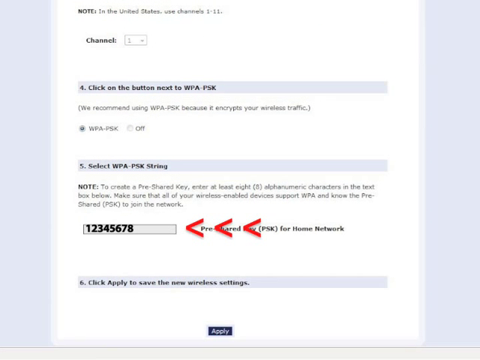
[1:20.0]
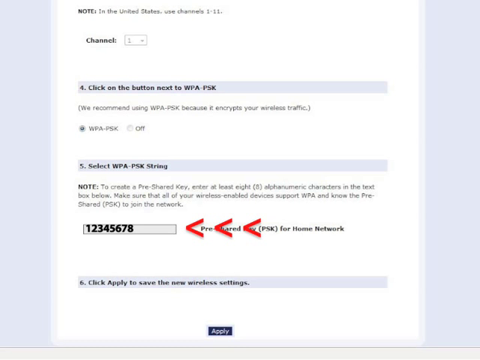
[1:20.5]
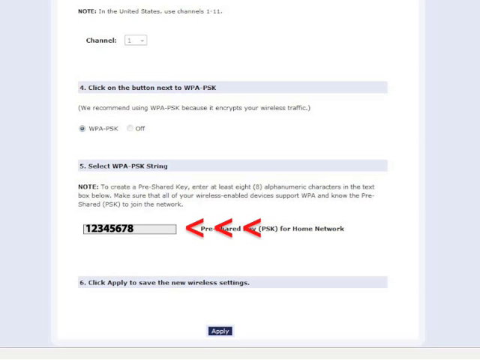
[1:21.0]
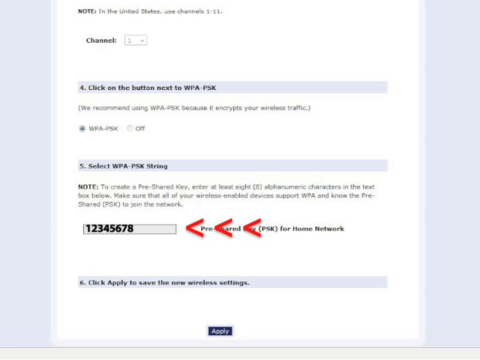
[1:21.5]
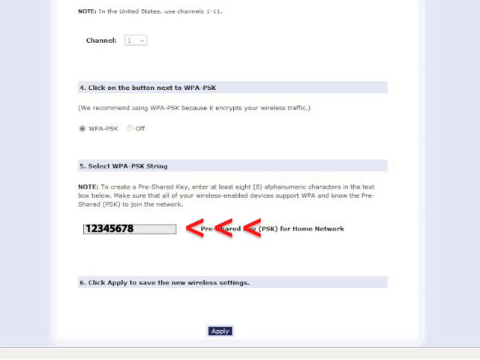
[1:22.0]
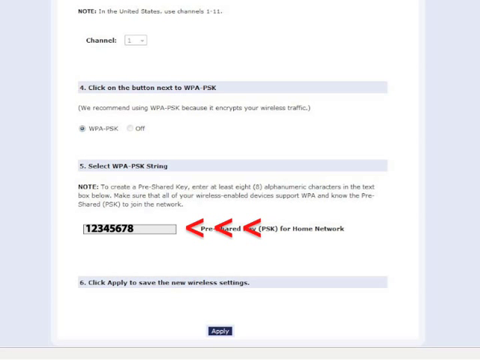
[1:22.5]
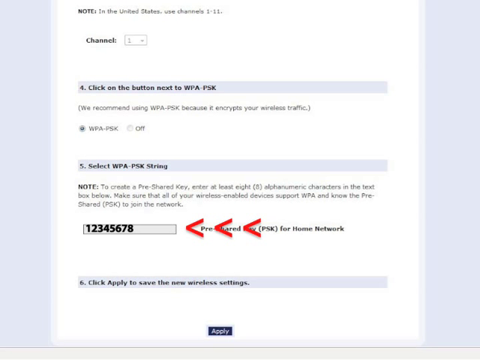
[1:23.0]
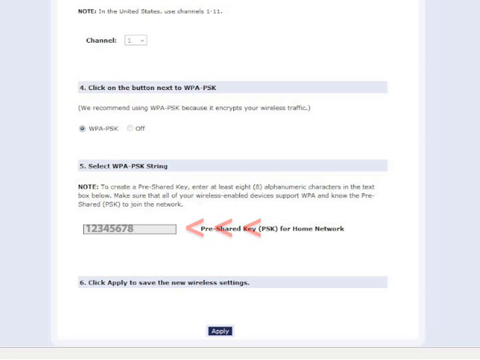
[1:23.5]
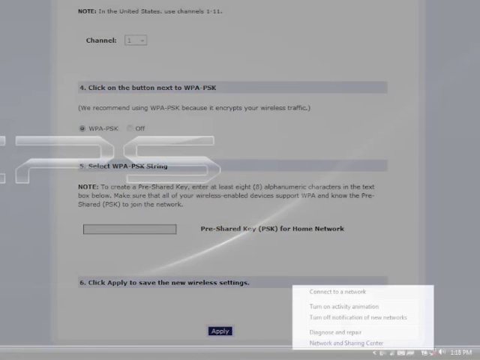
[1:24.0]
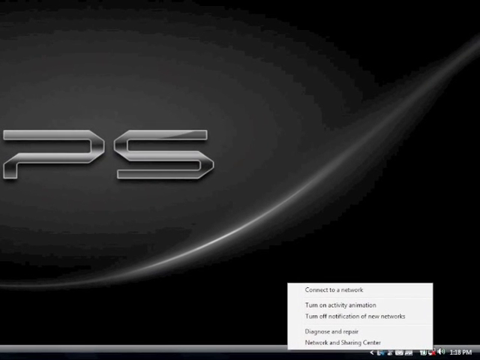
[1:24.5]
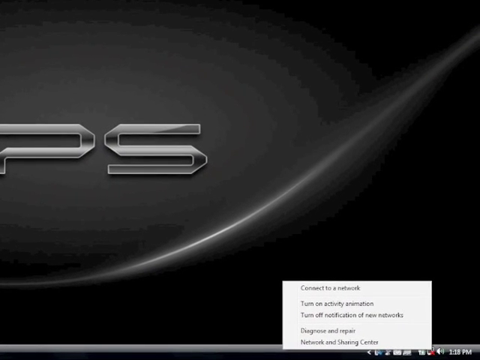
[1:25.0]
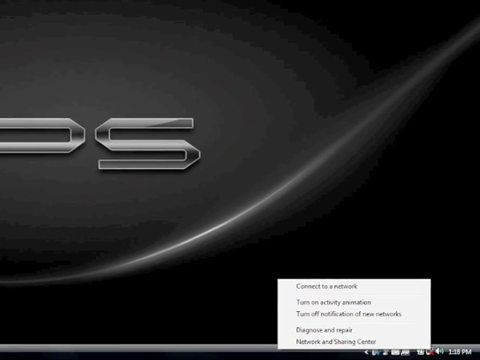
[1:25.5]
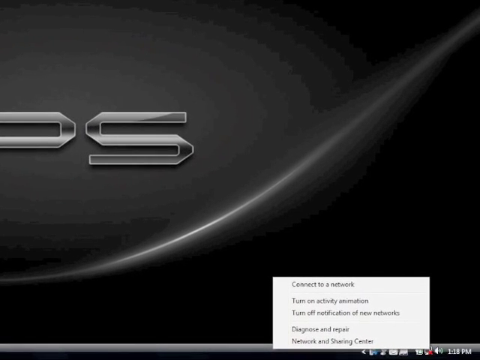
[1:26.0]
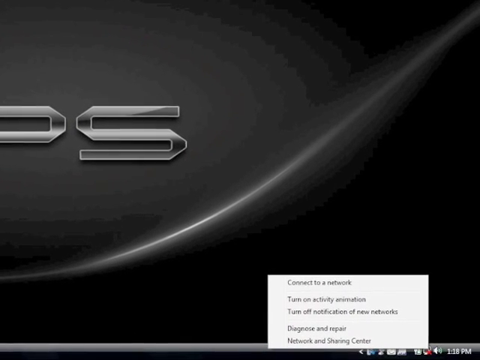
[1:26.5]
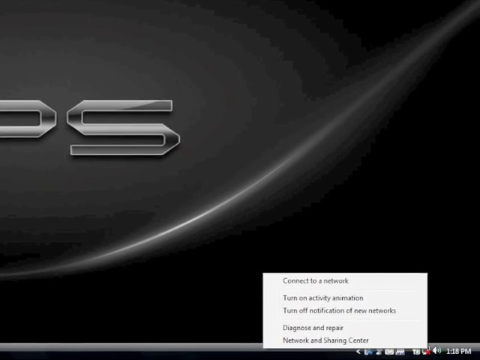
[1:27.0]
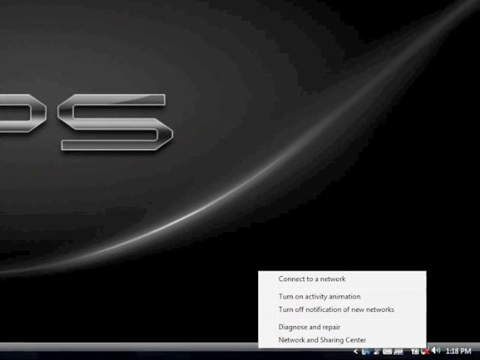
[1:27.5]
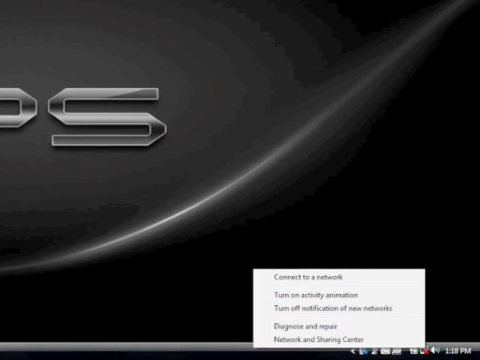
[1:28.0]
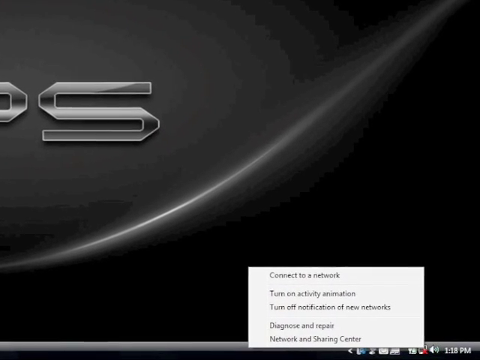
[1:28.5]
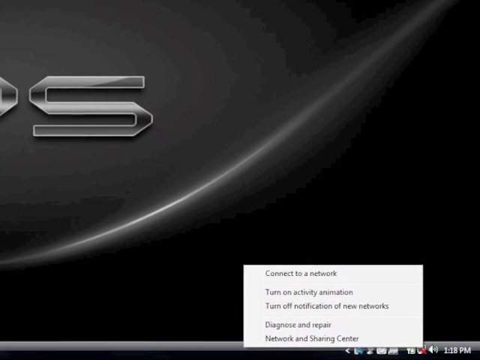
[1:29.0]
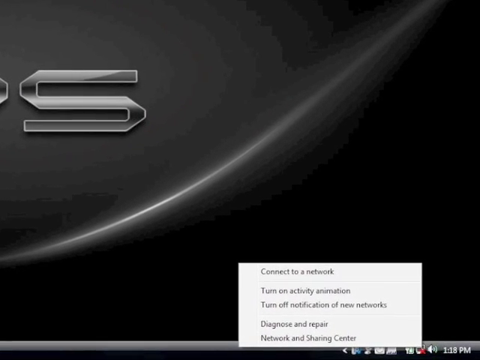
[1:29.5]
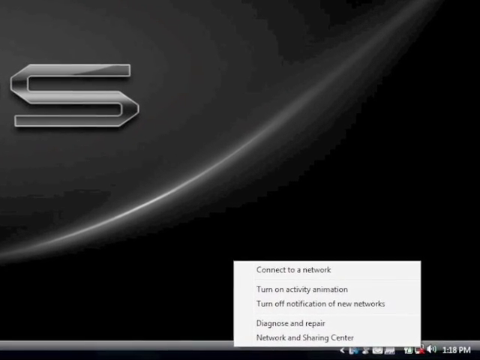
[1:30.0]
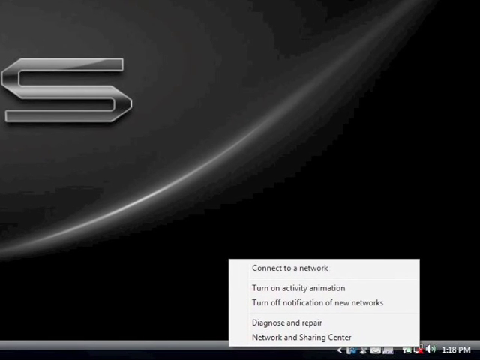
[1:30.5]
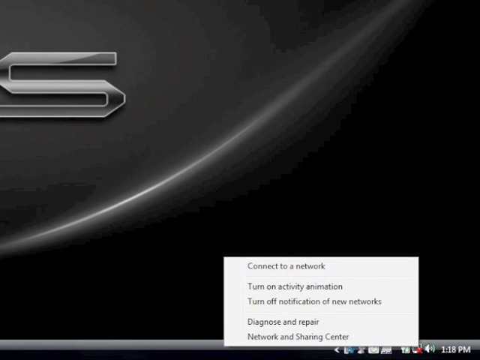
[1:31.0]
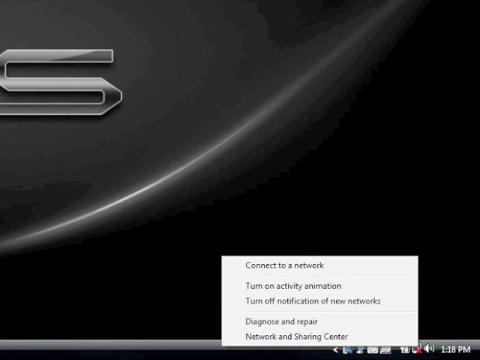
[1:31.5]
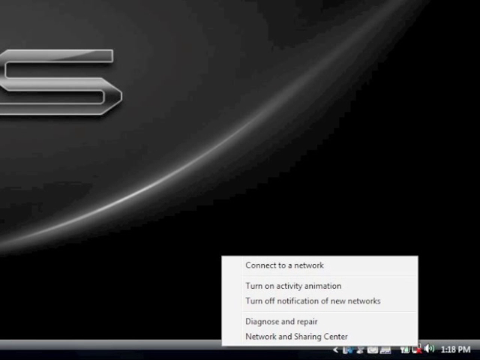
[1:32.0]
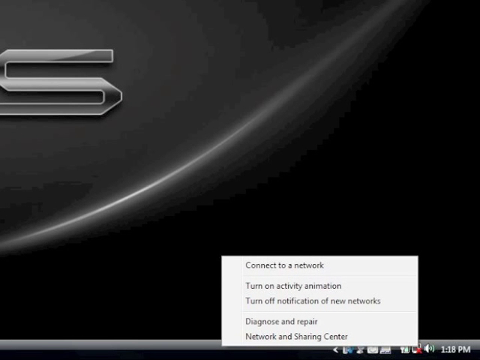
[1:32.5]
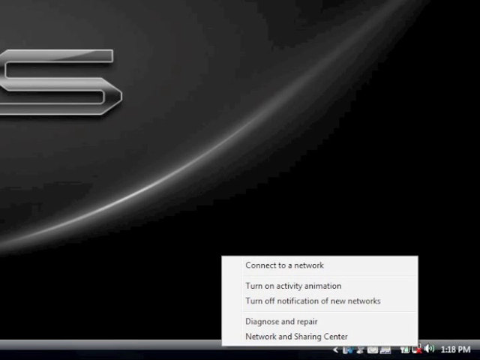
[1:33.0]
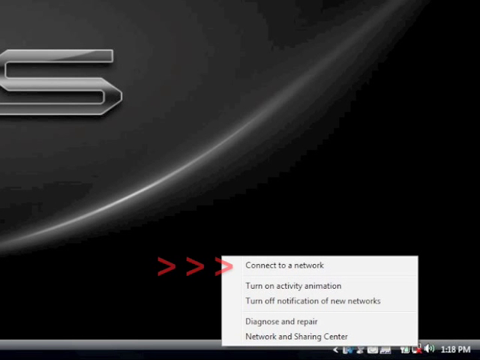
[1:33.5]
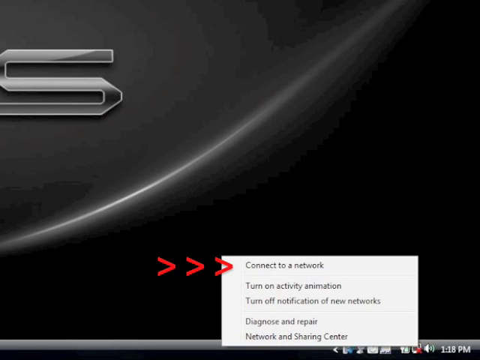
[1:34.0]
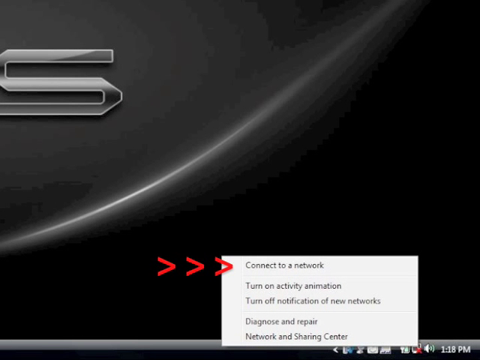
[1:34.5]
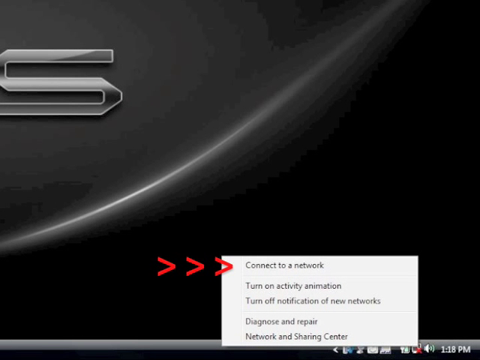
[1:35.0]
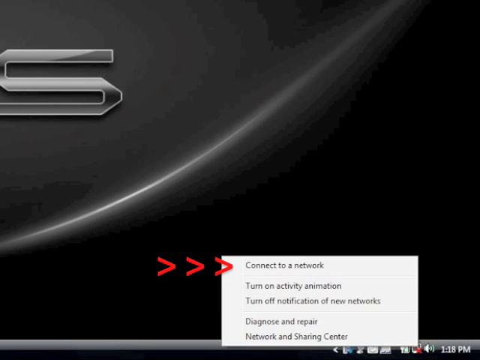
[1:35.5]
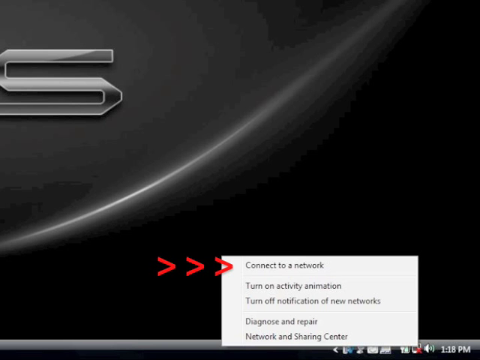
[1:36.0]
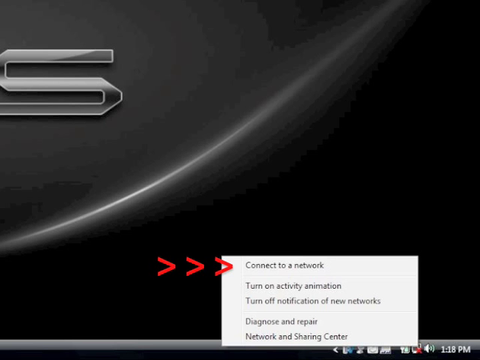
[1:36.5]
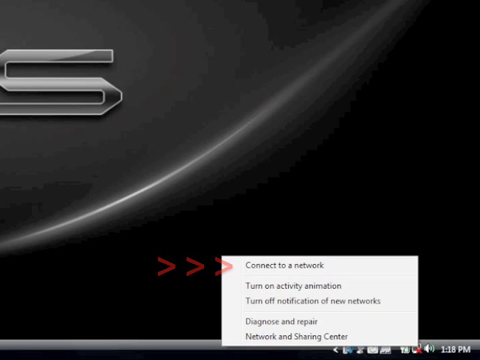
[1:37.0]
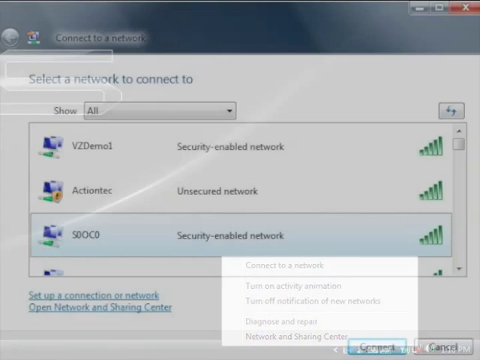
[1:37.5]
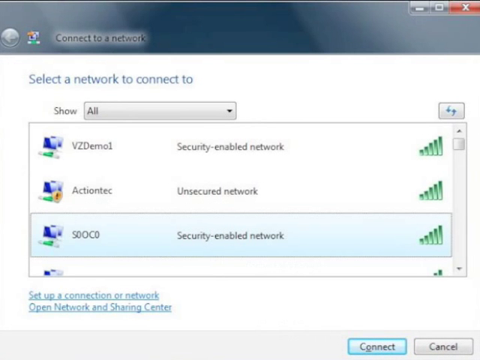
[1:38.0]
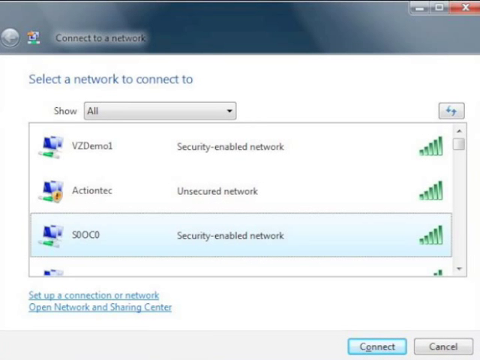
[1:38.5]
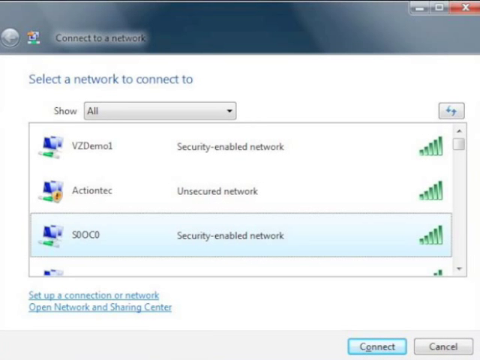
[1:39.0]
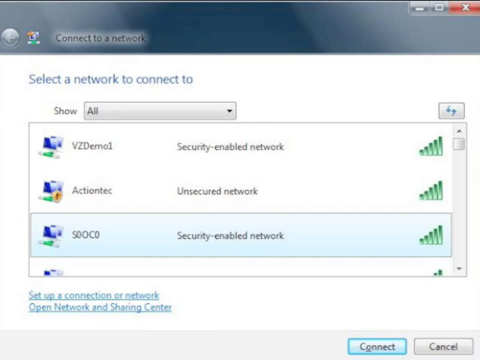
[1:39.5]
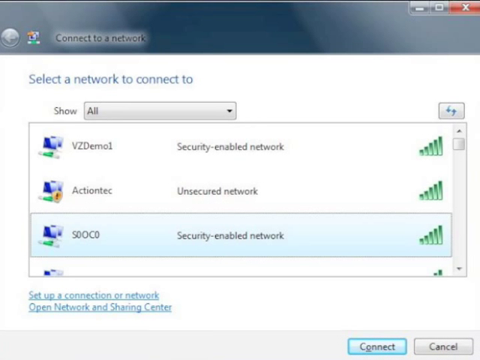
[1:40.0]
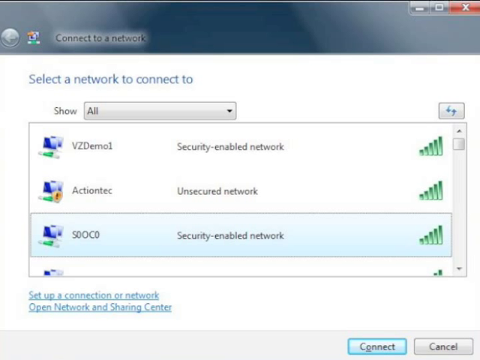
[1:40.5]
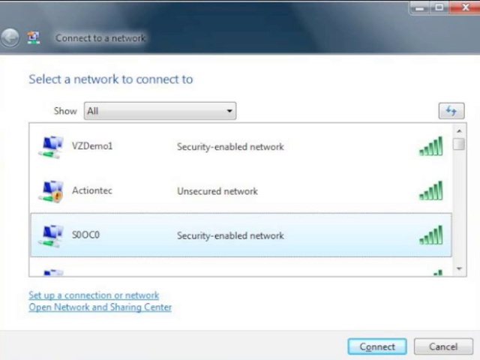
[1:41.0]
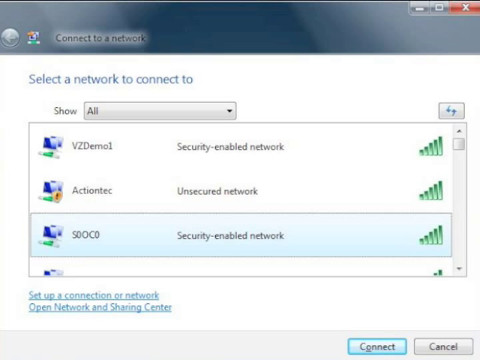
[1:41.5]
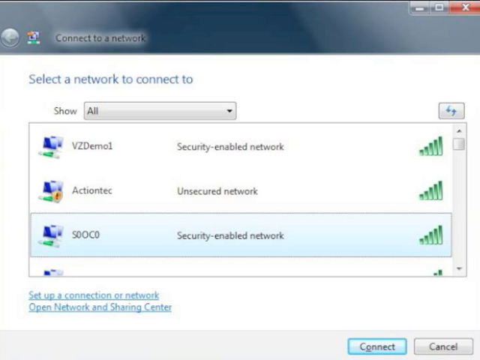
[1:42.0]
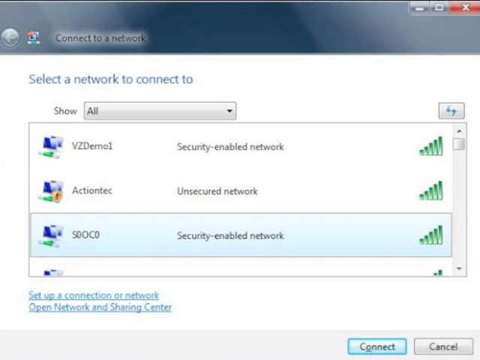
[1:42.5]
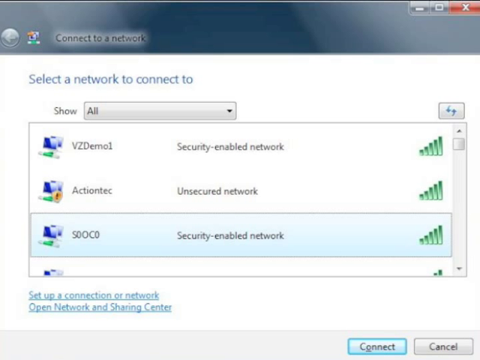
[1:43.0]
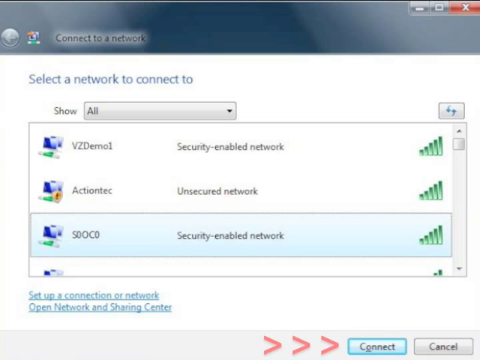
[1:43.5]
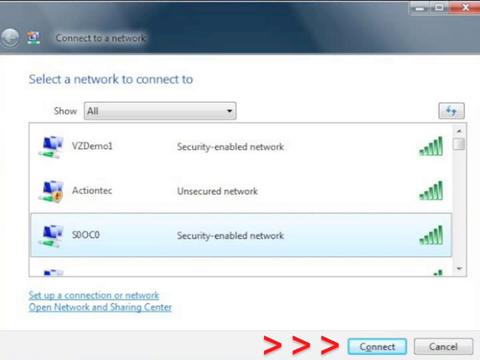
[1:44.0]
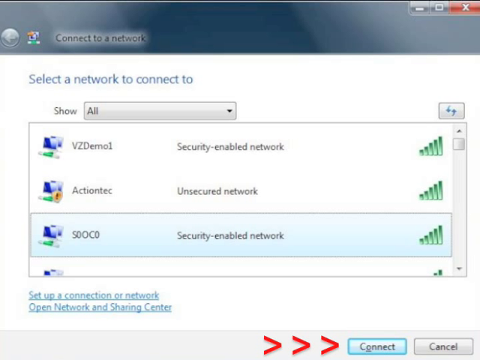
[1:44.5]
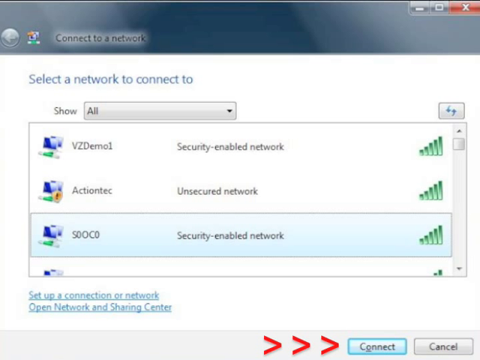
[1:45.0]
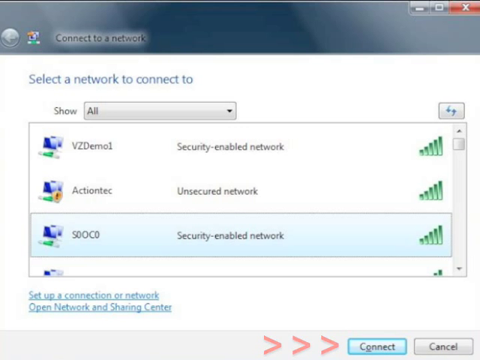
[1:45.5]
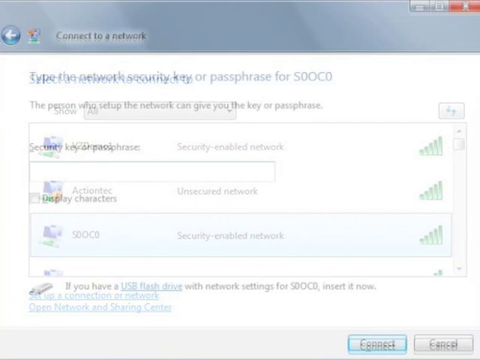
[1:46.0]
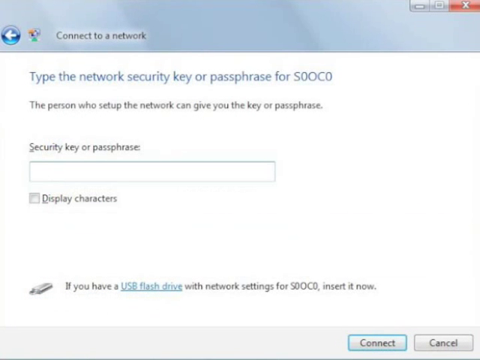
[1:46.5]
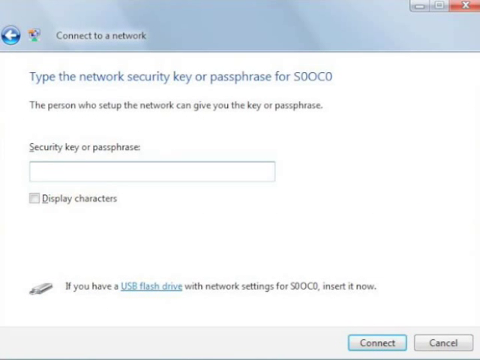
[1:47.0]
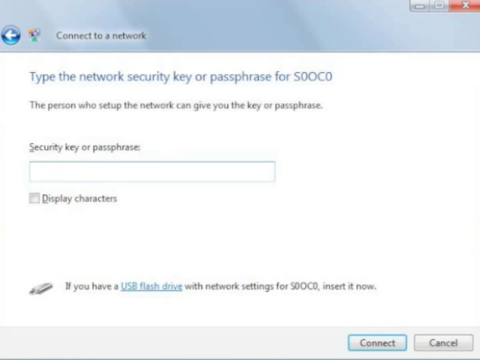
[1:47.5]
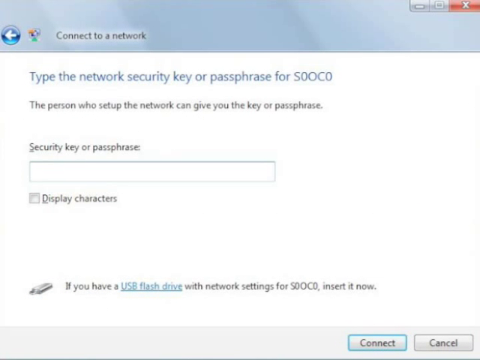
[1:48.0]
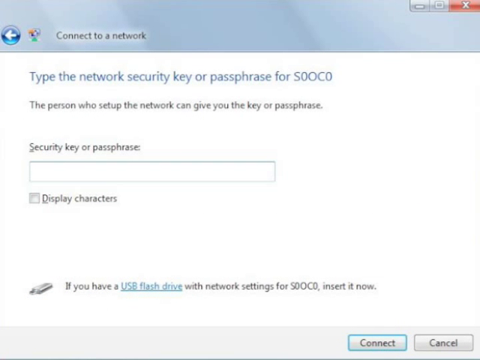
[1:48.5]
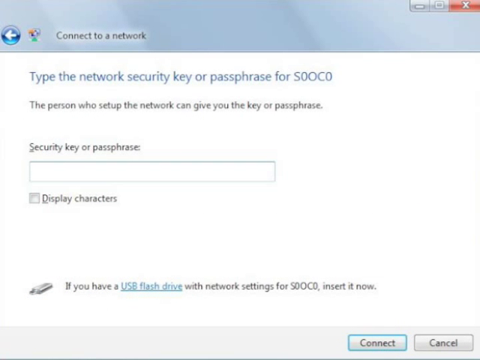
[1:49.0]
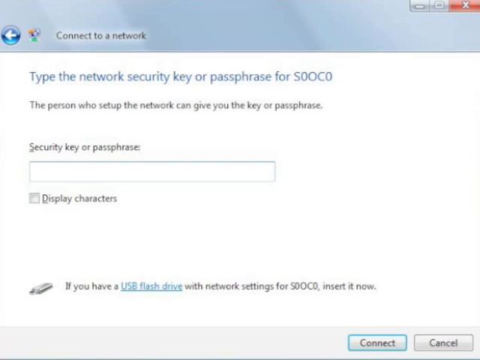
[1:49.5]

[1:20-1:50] A computer screen shows a browser tab with network settings, scrolled down so that options four, five and six on the page are visible. The focus is on option five, "select wpa-psk string," and its input box, with three arrows pointing towards it. The video then transitions to a computer screen with the person's desktop background visible, and the camera pans down towards the right-hand corner of the screen. A pop-up with options asking whether the user wants to connect to a network appears, and three red arrows point from the left side of the pop-up towards the top option, "connect to a network." Next, a different window shows the connect to a network settings with a list of available networks. The video then shows a network security key input for the network S0OC0.